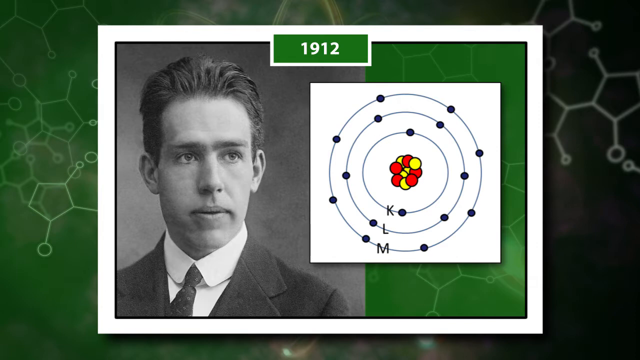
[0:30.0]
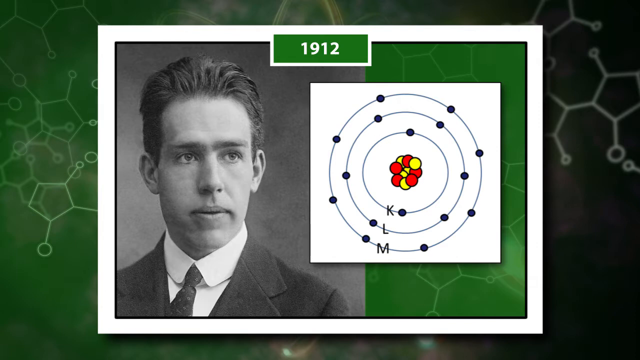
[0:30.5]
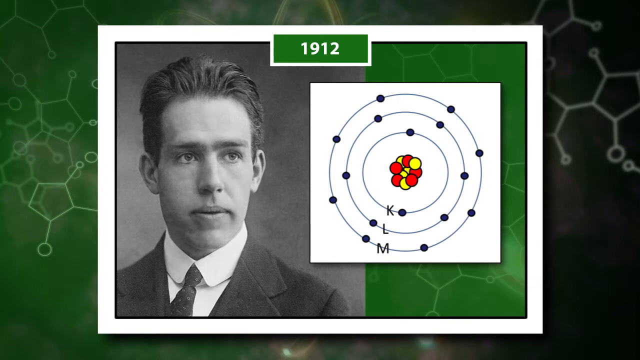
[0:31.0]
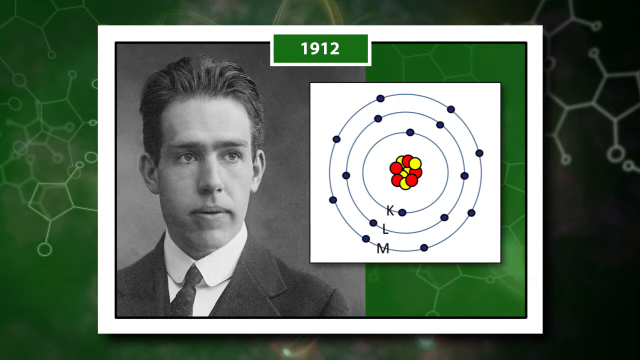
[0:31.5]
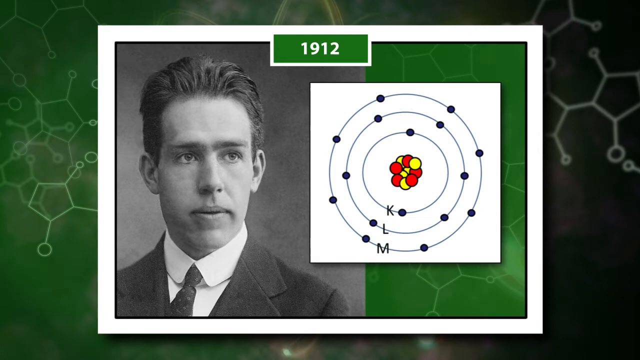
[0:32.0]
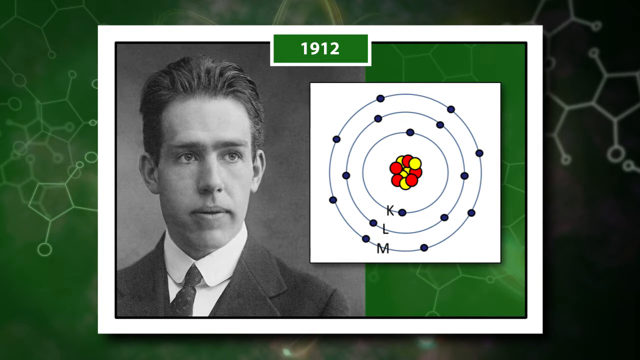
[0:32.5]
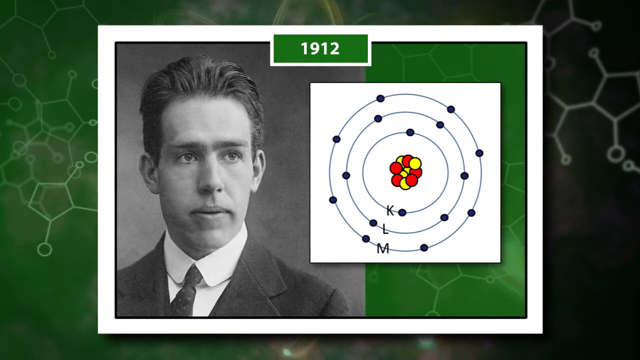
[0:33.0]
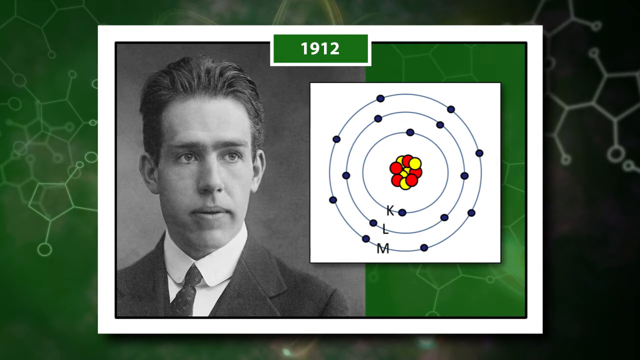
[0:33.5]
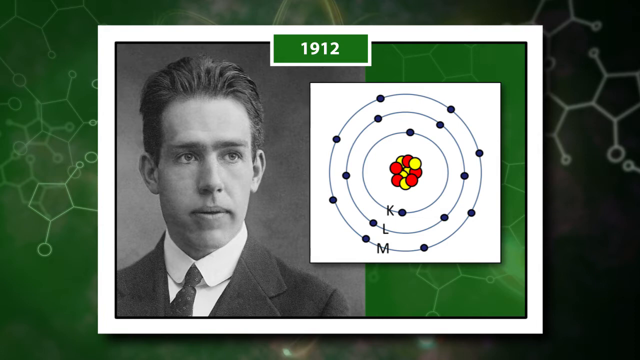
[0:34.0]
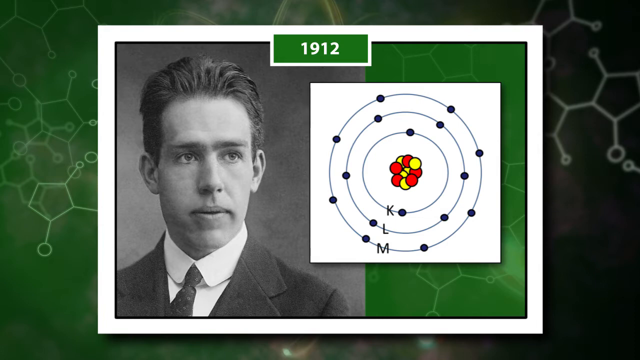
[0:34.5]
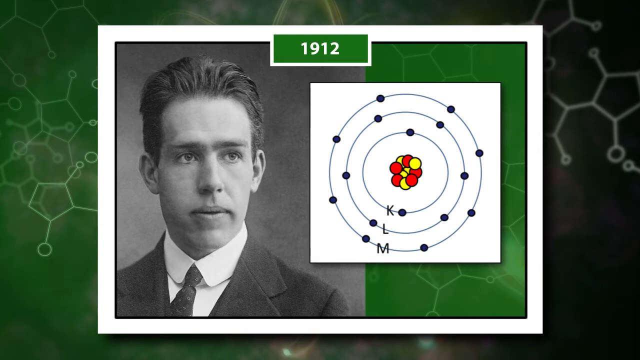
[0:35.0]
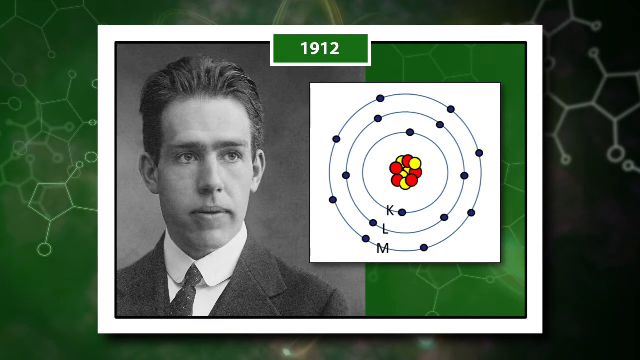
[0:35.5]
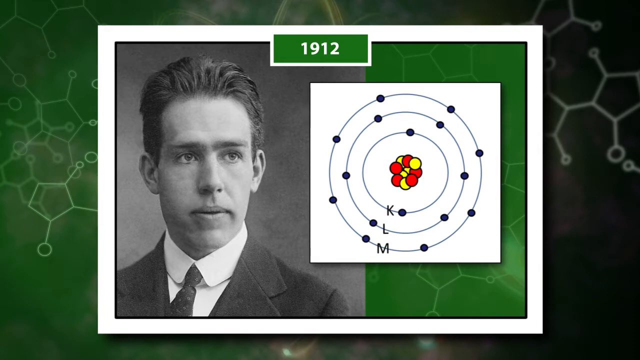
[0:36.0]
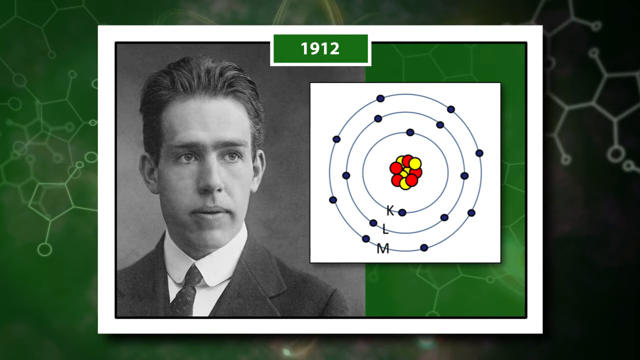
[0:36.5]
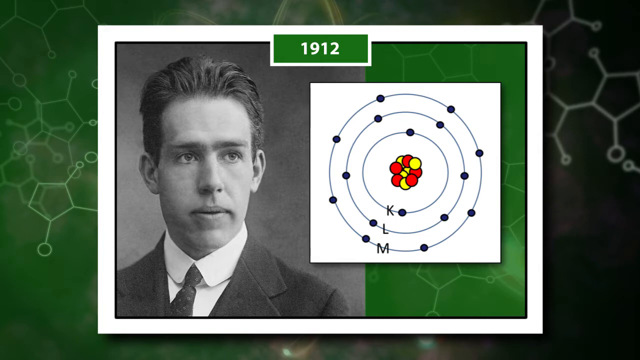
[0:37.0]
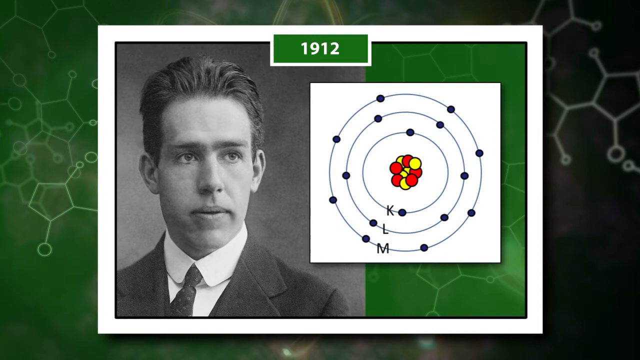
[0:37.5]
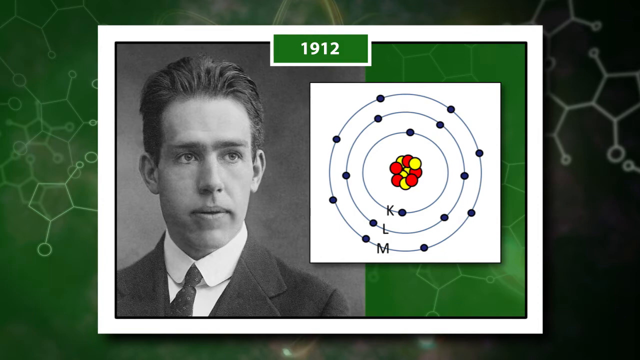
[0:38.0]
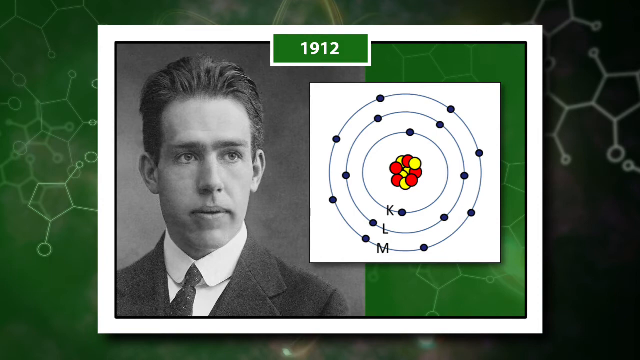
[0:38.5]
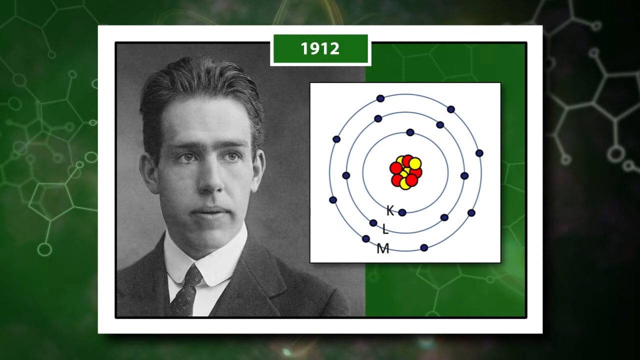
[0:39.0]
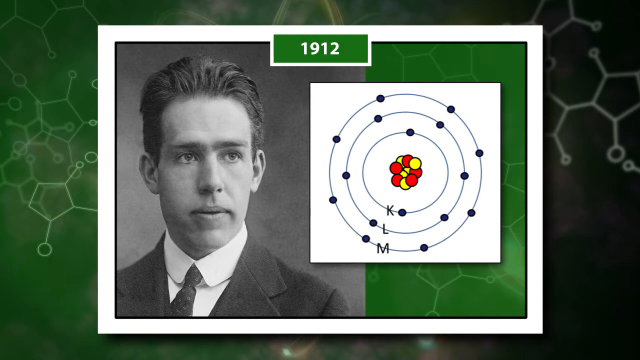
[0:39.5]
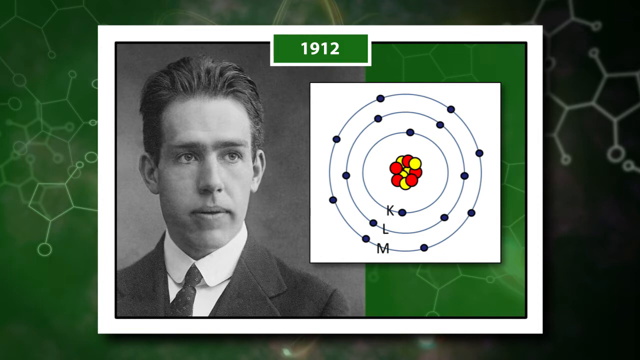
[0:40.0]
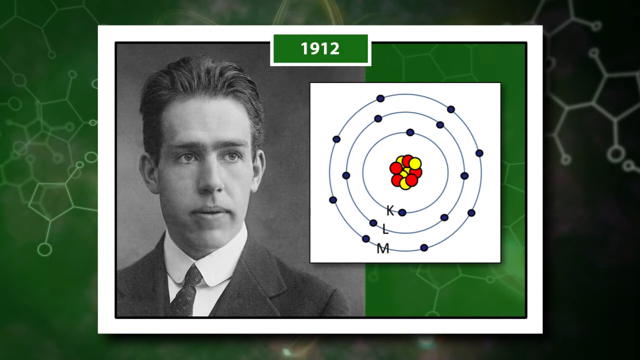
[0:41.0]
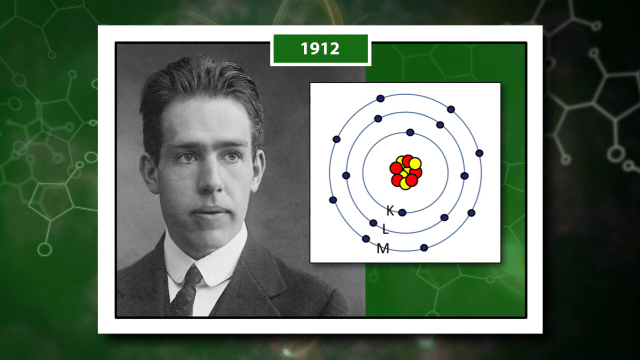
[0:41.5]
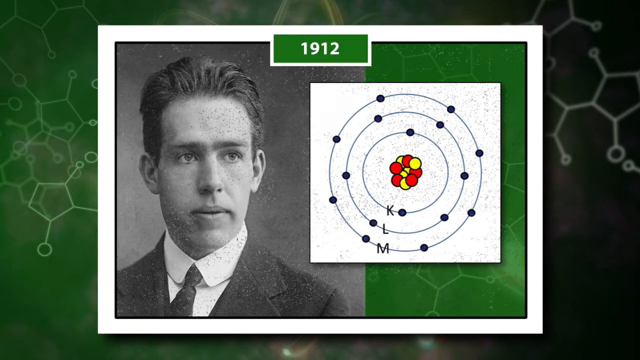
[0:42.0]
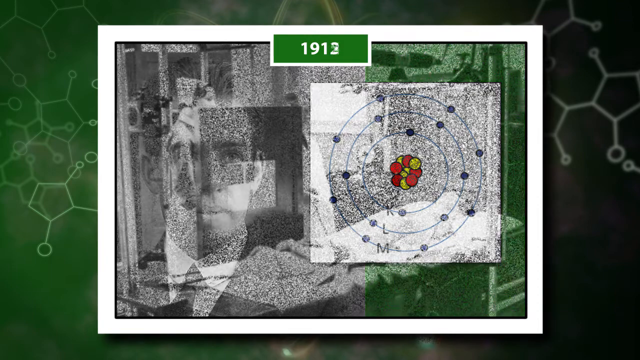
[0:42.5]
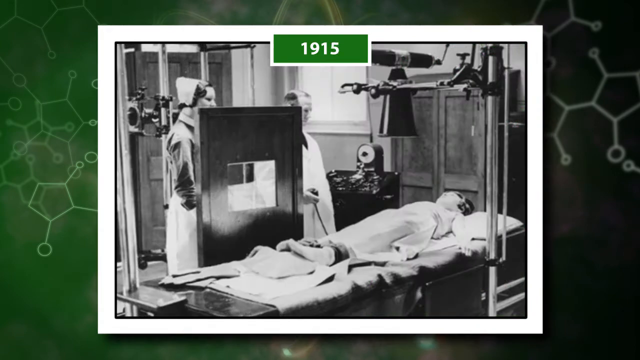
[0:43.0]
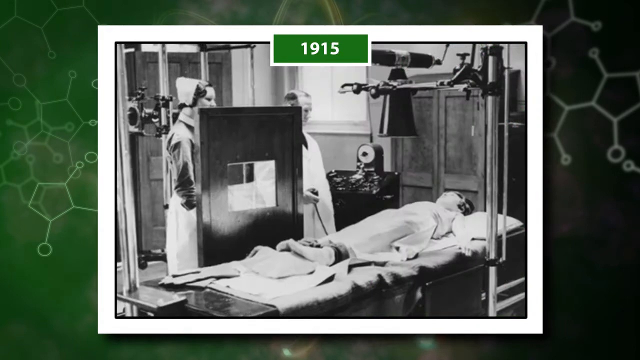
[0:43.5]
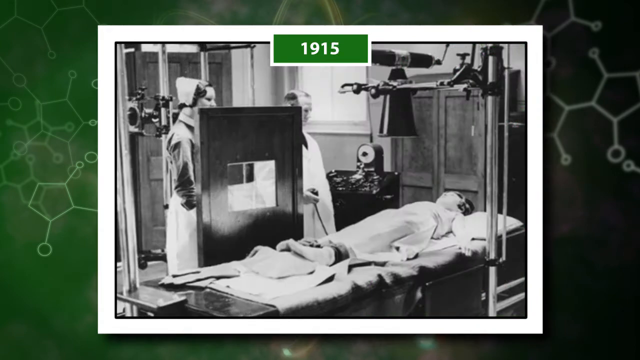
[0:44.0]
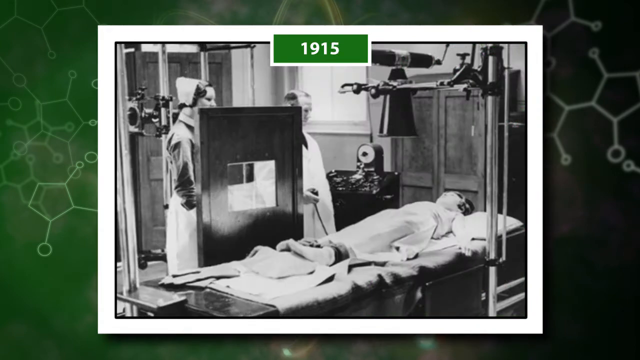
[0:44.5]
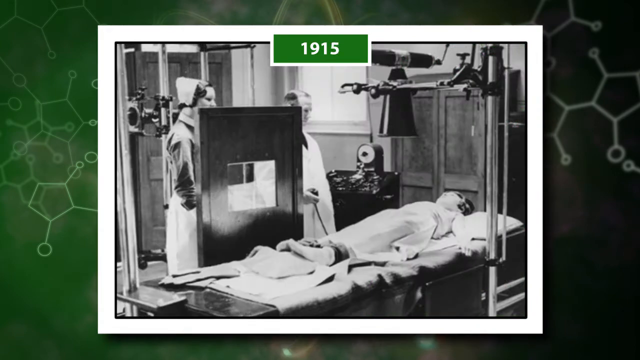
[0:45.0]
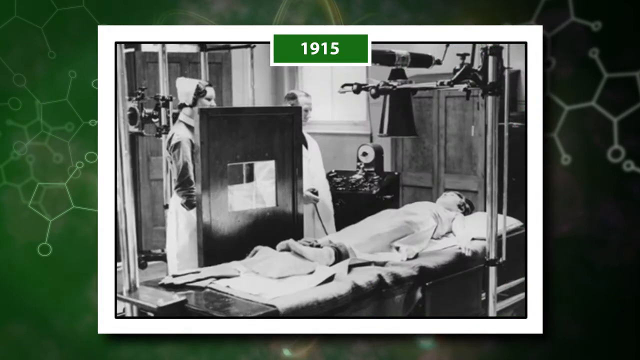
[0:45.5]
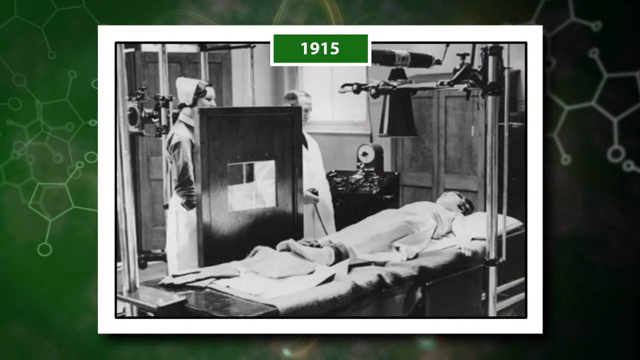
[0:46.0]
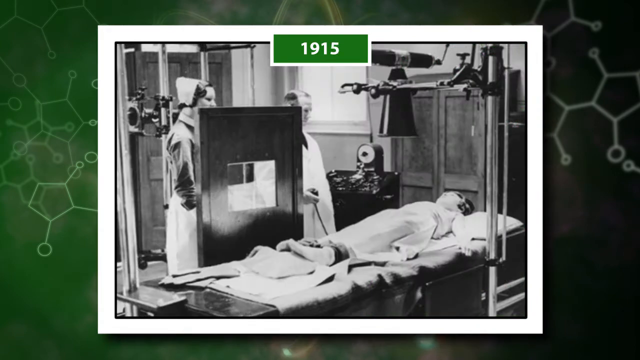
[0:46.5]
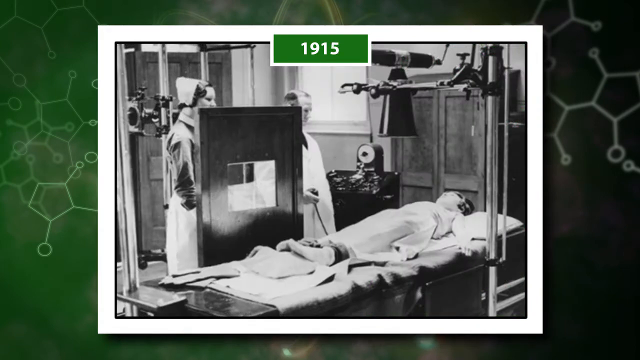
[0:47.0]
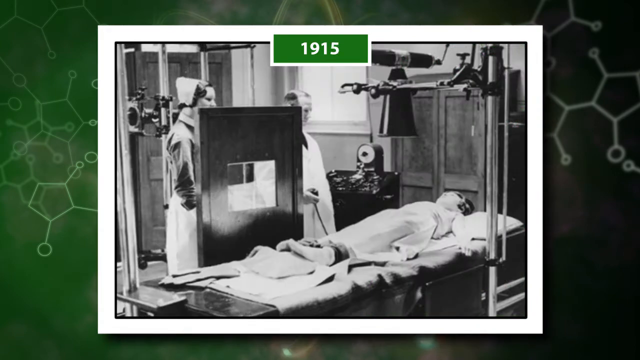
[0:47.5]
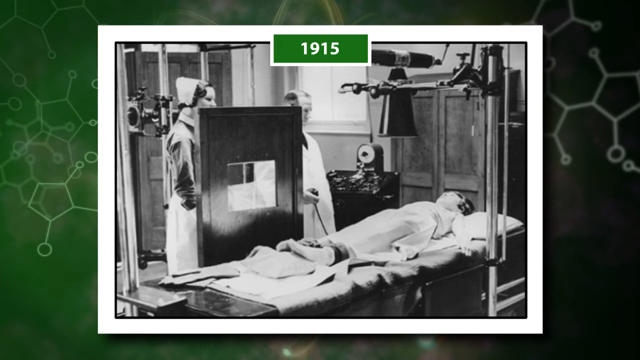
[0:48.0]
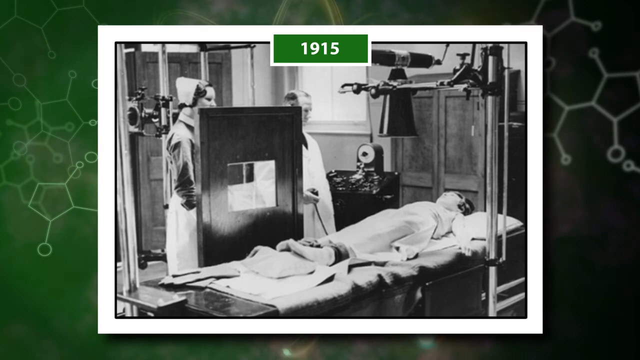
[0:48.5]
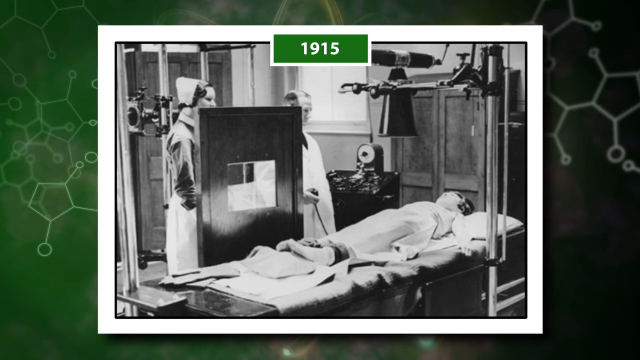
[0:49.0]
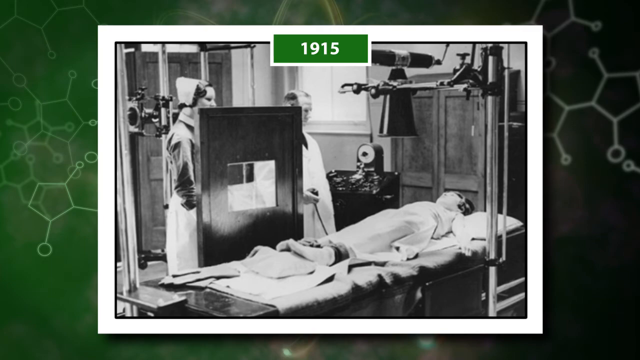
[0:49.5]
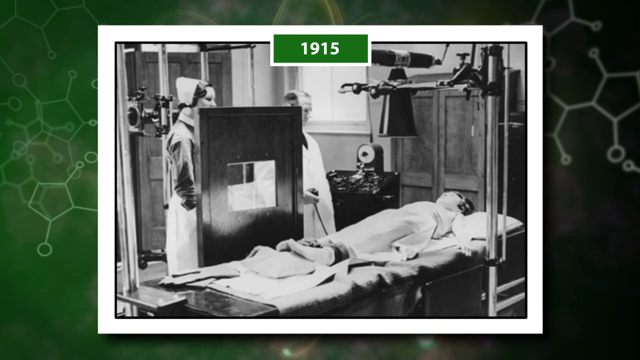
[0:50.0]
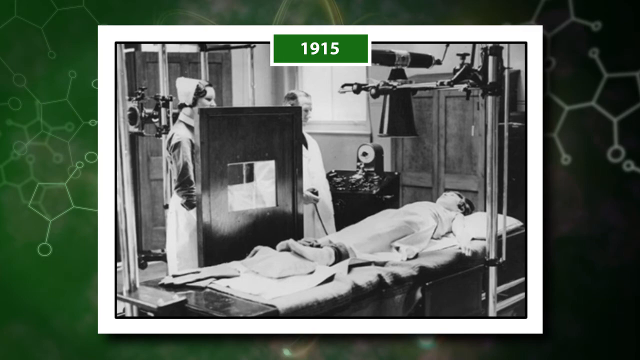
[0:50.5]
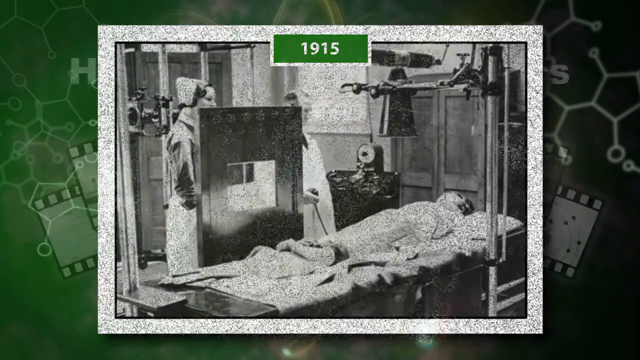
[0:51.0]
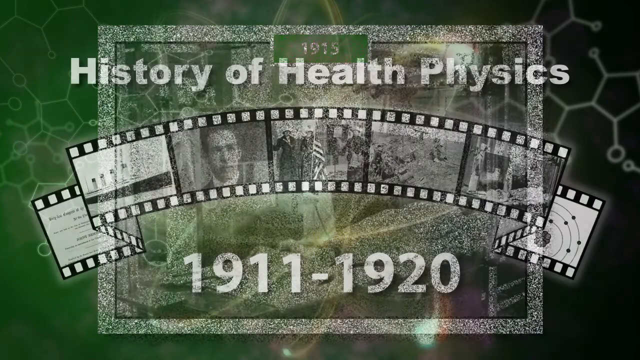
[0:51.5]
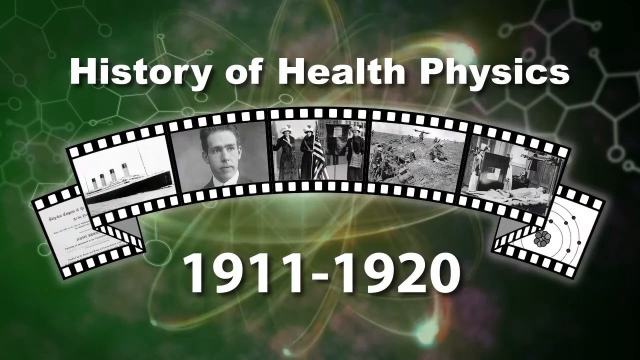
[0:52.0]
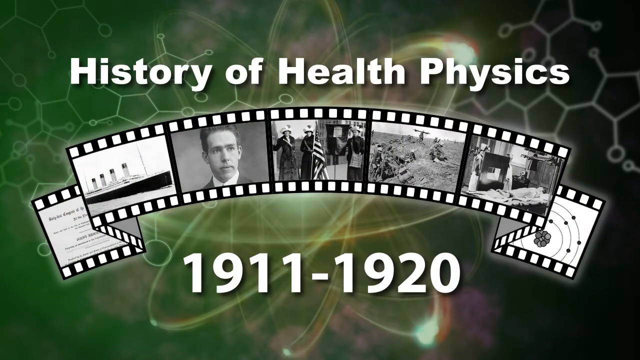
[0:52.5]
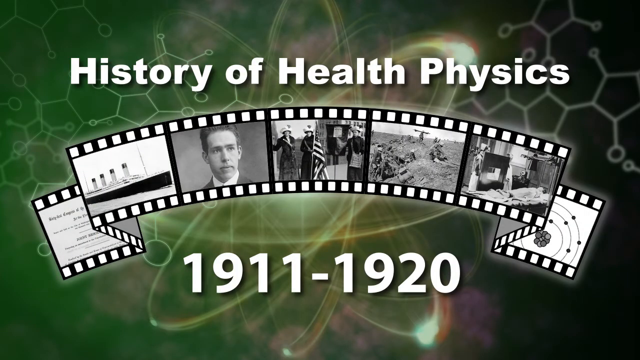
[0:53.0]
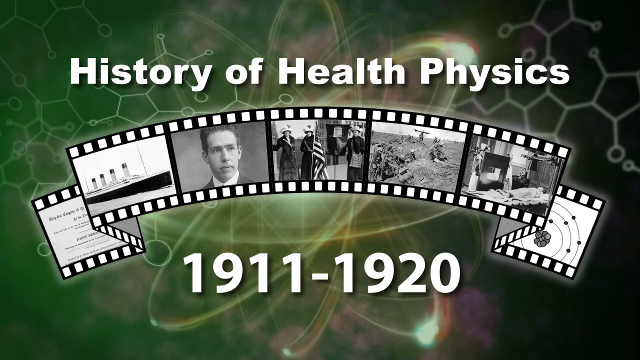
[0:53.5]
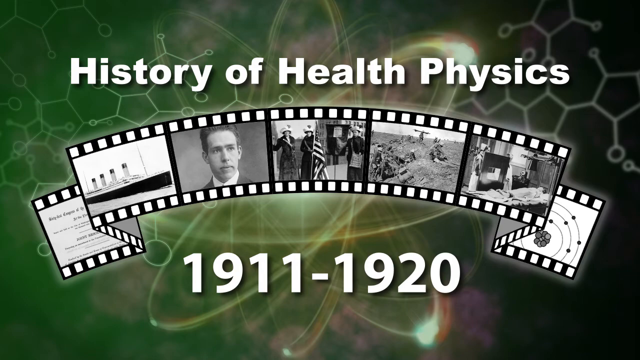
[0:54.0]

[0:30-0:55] The man appears on the left side of the screen in a black-and-white image. He has a long face and brown, fair skin, and wears a dark tie, a white collared shirt and a blazer; he is not fully visible because the image is zoomed in on the other side of him. That side shows some type of molecule: in the middle are red and yellow circles that are kind of attached to each other, with the letters K, L and M each on their own loop. The image then switches to a black-and-white picture of people practicing on a dummy, with text reading "medical school" and "nursing school" and the date "1915." The video then returns to the "history of health physics" title seen at the beginning, with "1911", a dash and "1920" at the bottom beneath the images.